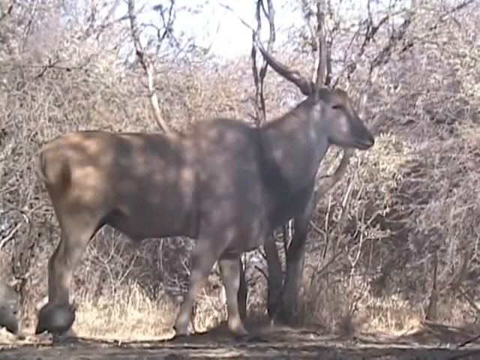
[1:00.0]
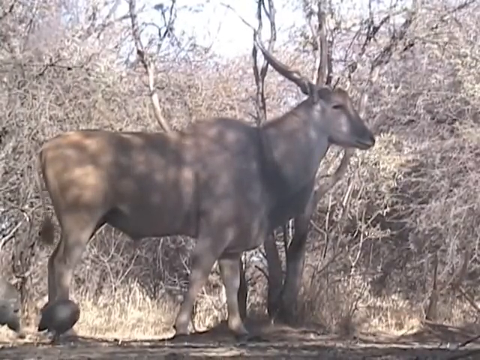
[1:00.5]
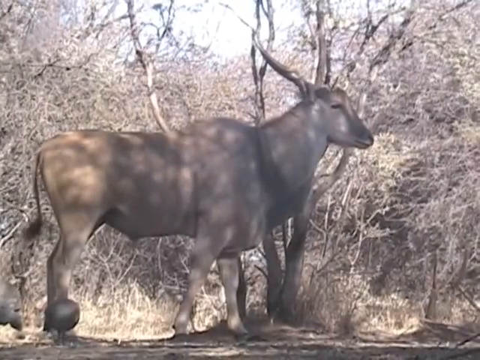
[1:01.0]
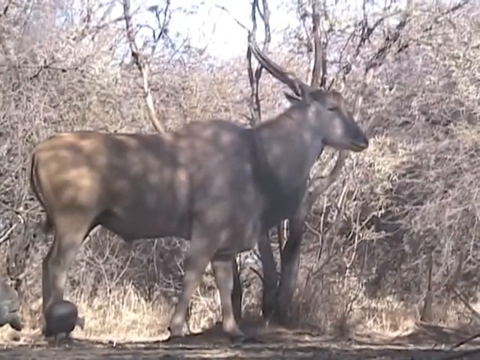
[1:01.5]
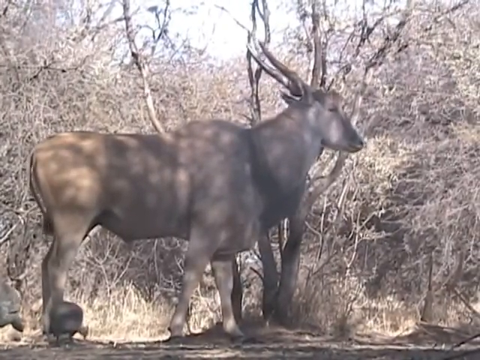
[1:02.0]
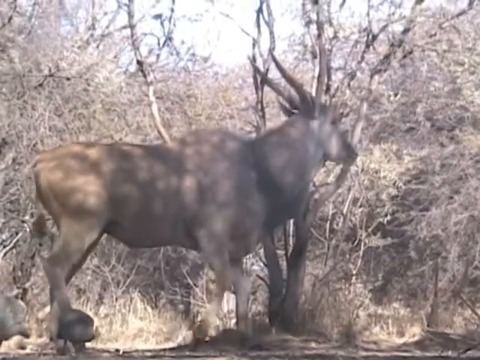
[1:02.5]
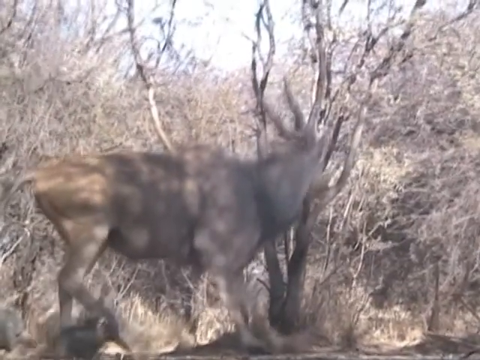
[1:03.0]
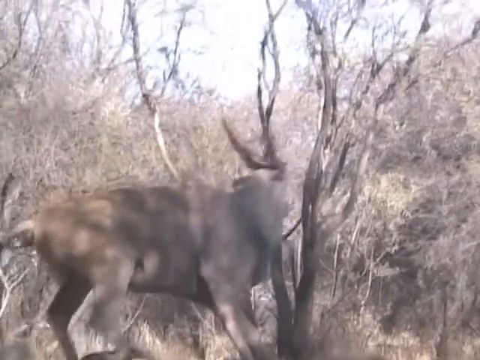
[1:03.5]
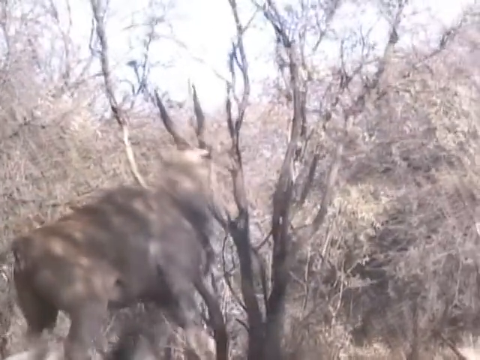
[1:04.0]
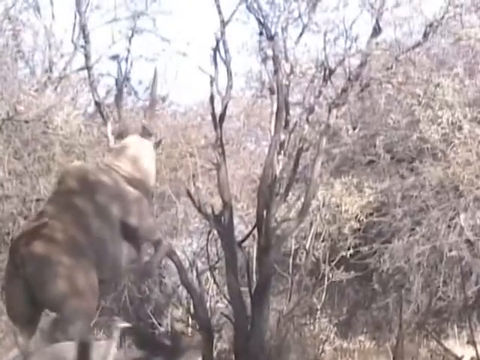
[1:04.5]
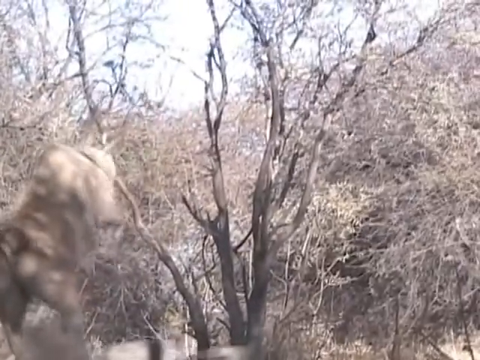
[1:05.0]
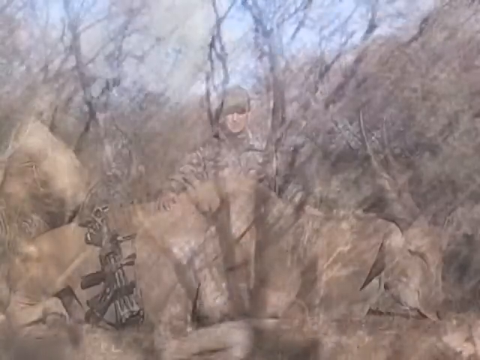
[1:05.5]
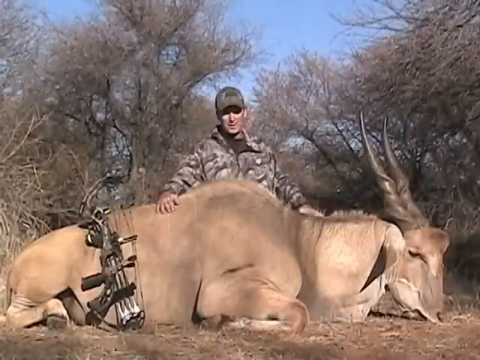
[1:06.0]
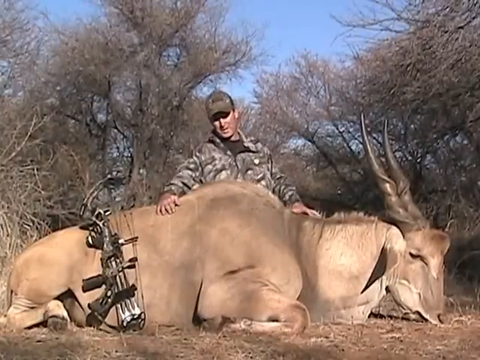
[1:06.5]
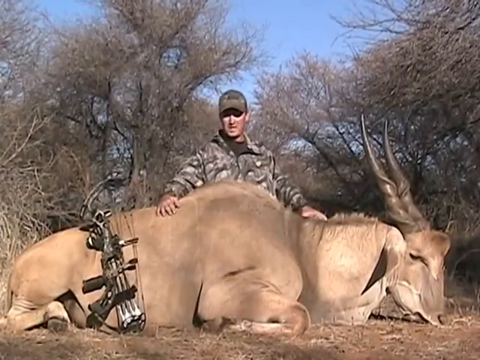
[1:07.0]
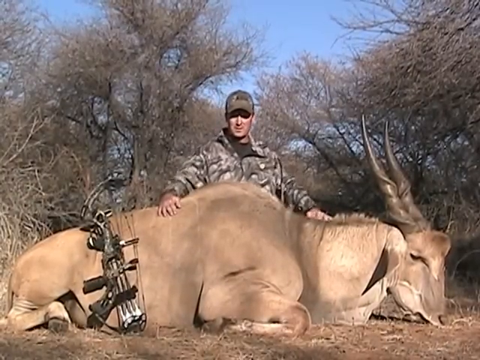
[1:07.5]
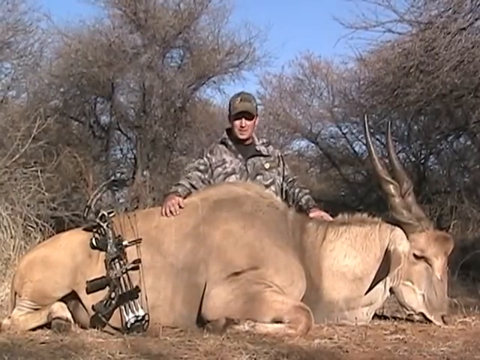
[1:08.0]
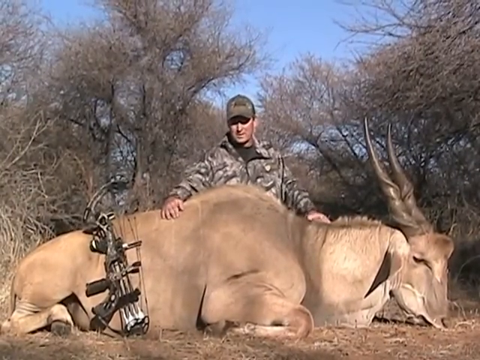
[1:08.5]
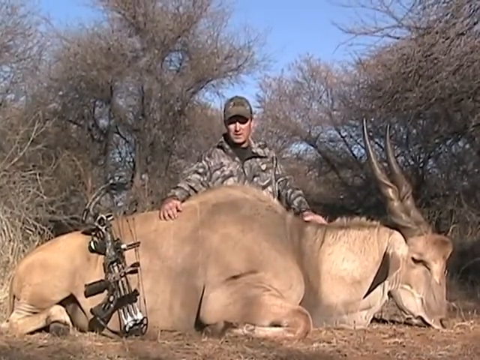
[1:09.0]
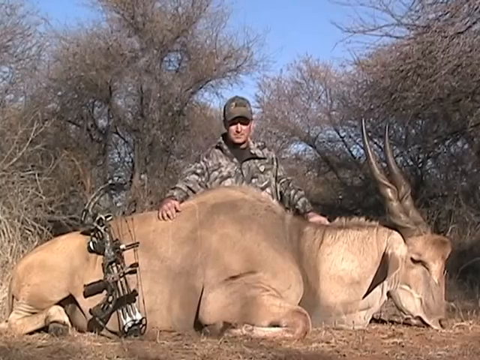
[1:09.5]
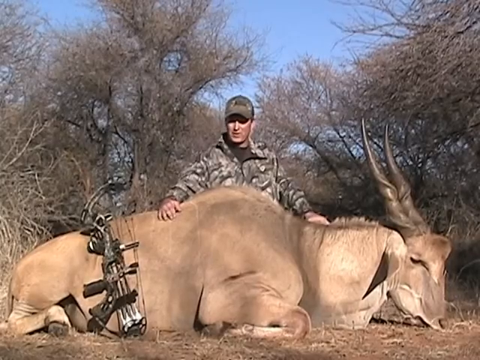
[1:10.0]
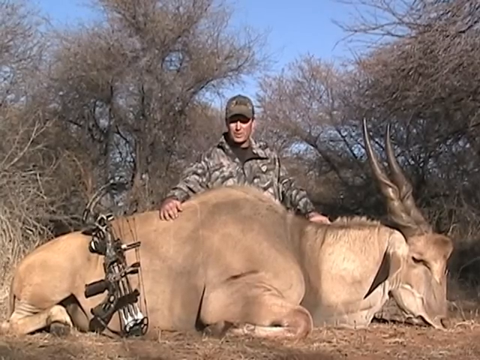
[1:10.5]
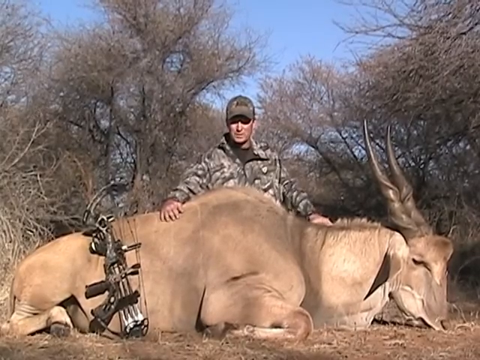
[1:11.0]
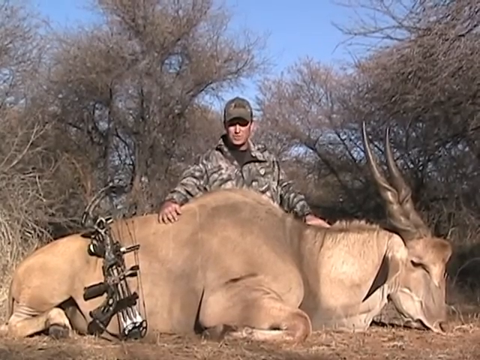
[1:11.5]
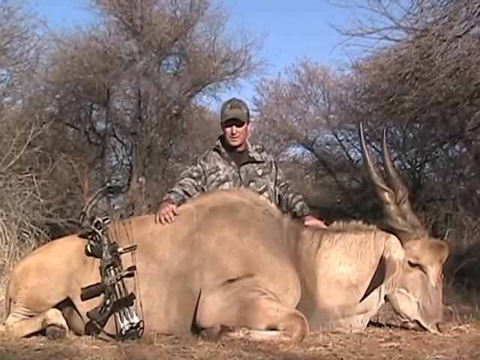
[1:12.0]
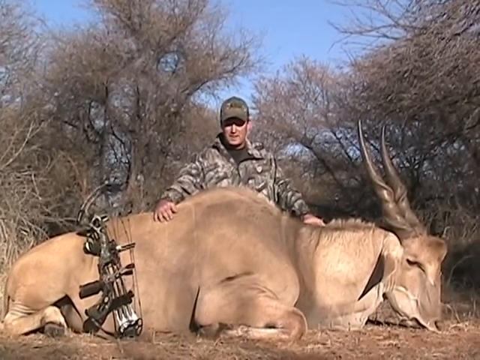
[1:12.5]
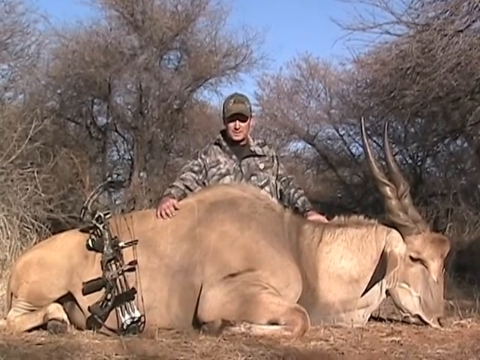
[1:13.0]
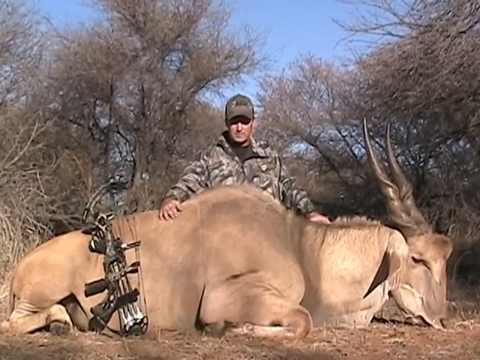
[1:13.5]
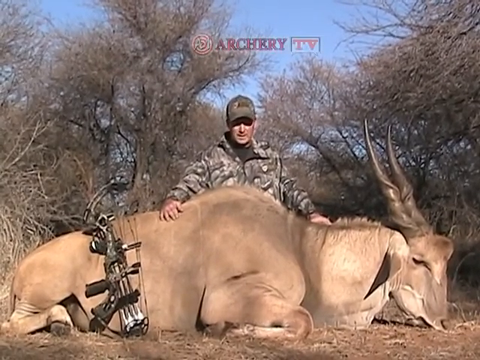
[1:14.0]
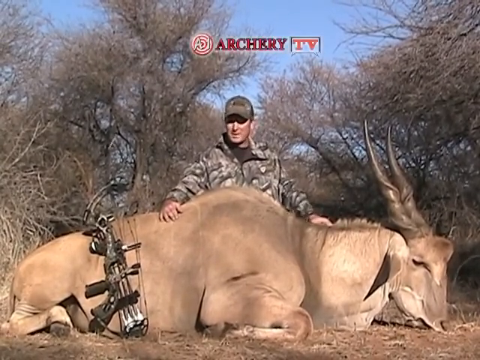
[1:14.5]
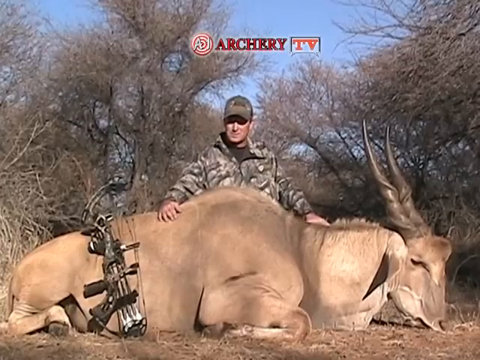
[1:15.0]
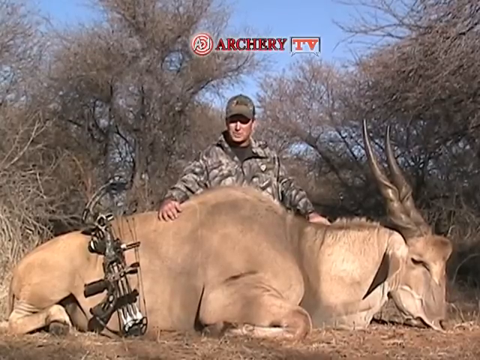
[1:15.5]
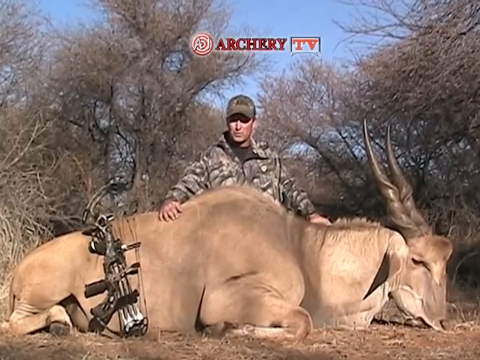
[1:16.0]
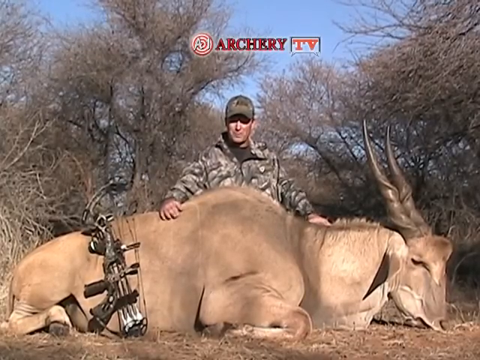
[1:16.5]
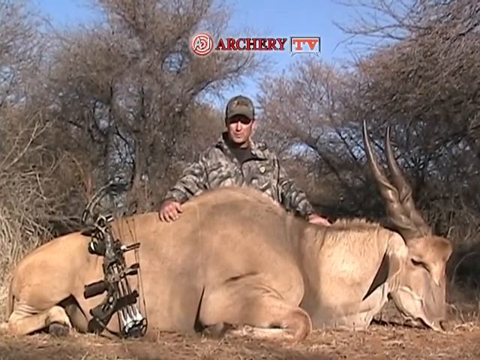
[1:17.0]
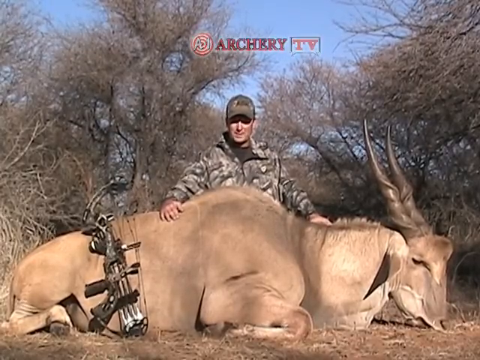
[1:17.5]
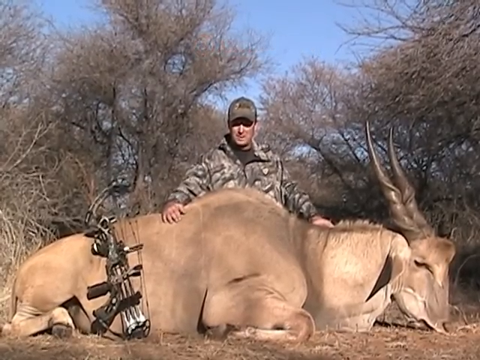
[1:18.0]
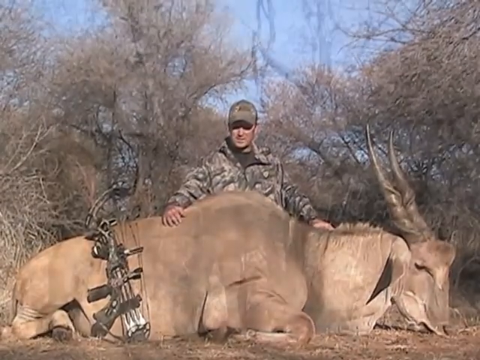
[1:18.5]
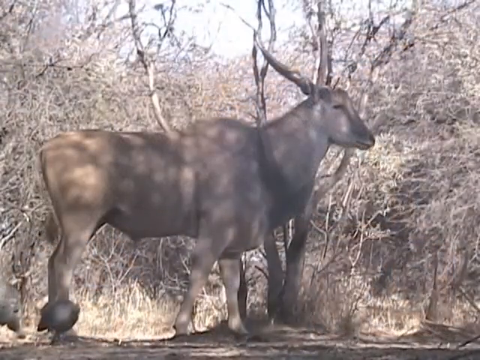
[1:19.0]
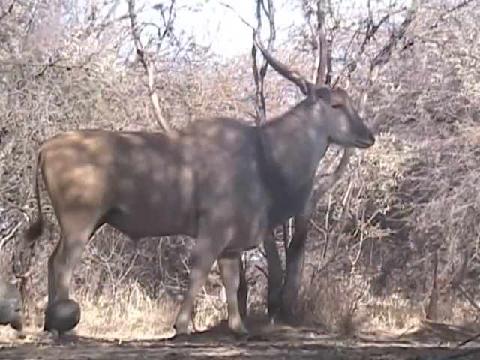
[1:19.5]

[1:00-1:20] In slow motion, the springbok slowly looks over to its left before jumping up to the top left and dashing away into the brush. The next image shows a man stood over the dead remains of one of the springboks. The man is a hunter wearing camo-style gear and a hunting cap. His hunting crossbow rests on the springbok's stomach. The springbok is lifeless. There is blue sky, with wilderness and bush behind. The man speaks to the camera as he stands over the springbok. The springbok is sat down in a neutral position on all four legs, with its chin resting on the ground, its eyes closed and its ears down. The bushes around it are shaking in the breeze, and the sky is bright blue.